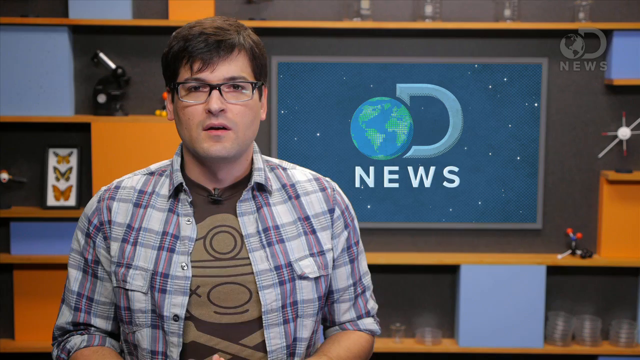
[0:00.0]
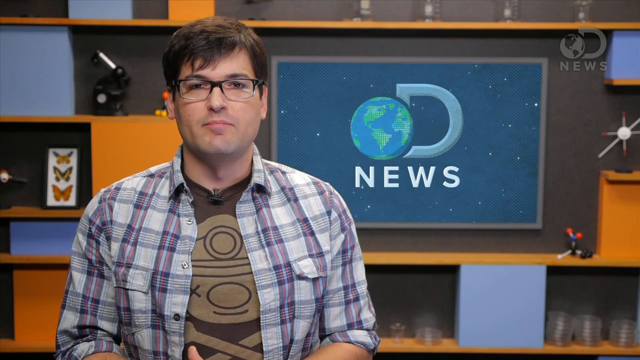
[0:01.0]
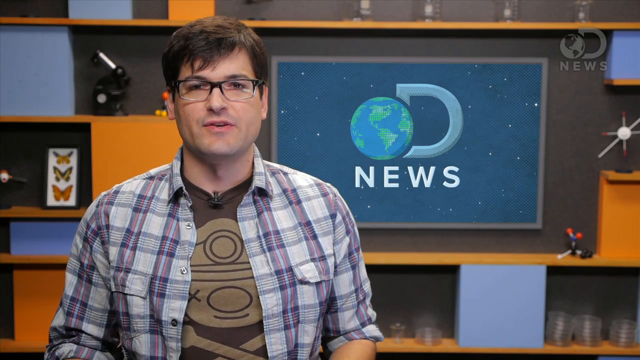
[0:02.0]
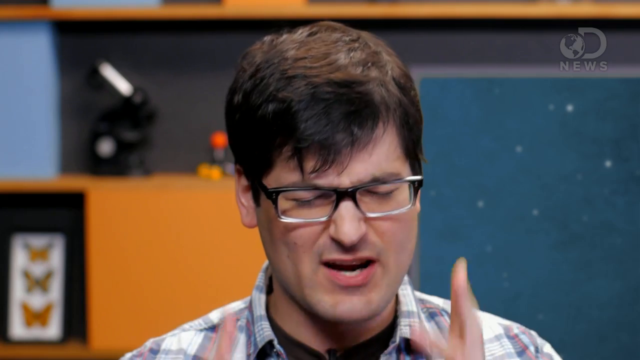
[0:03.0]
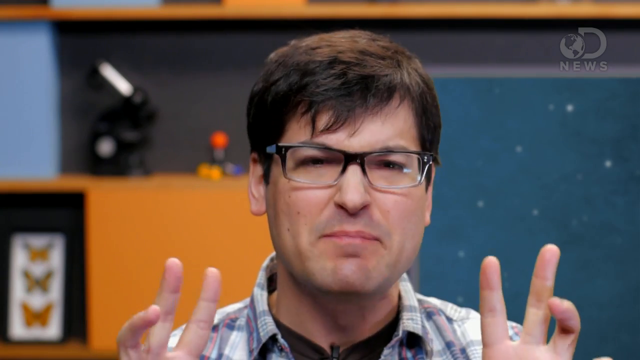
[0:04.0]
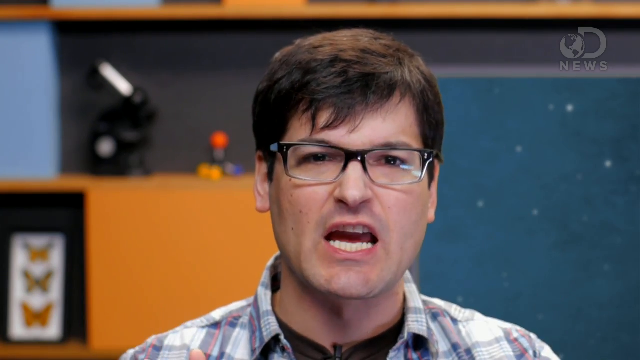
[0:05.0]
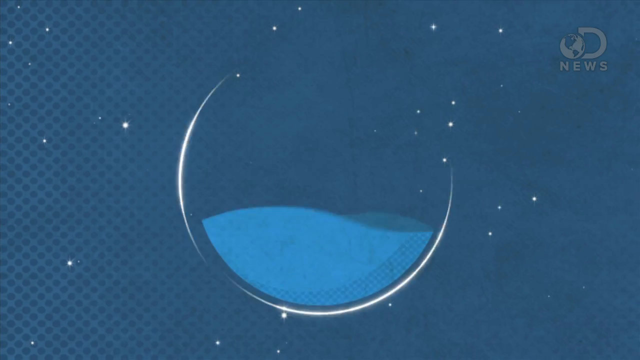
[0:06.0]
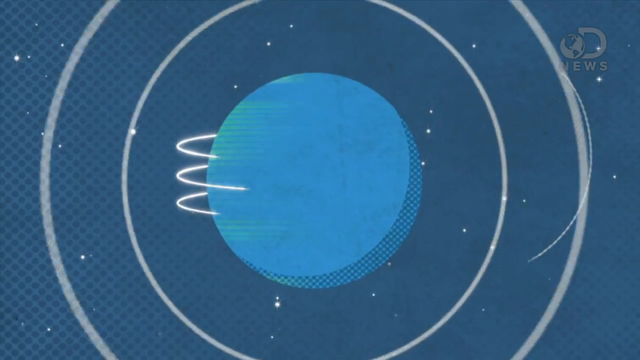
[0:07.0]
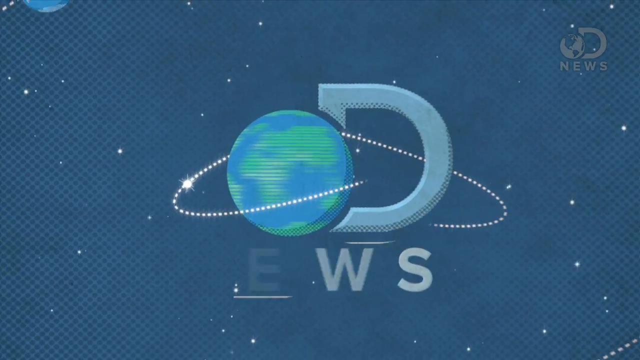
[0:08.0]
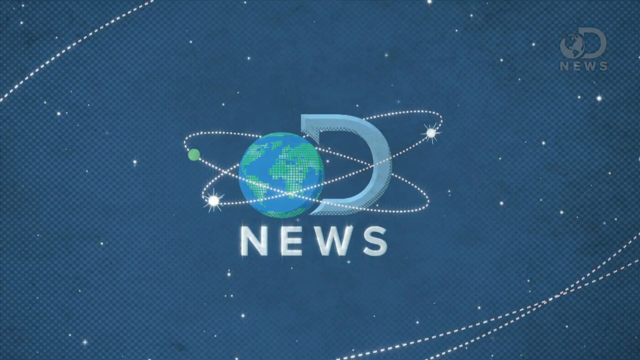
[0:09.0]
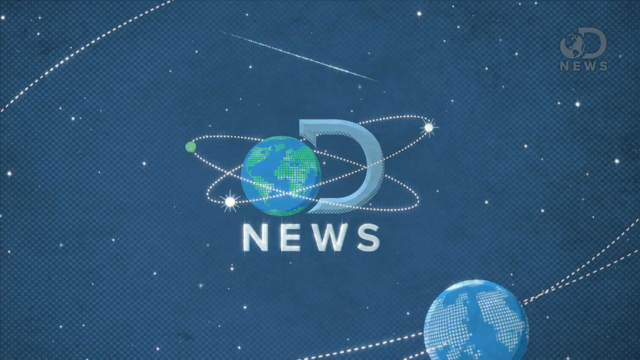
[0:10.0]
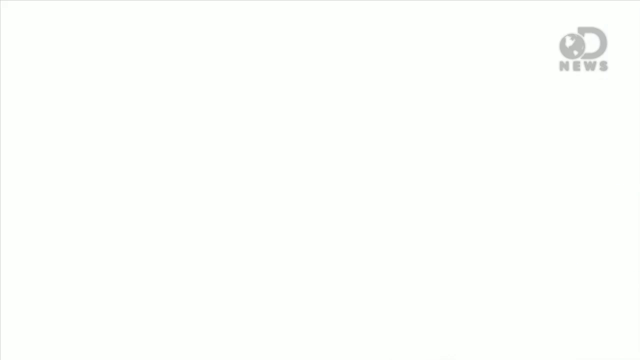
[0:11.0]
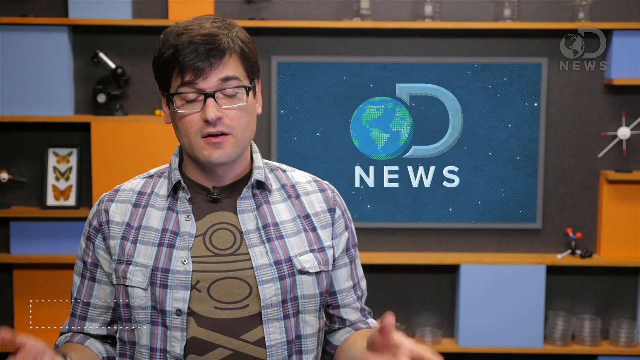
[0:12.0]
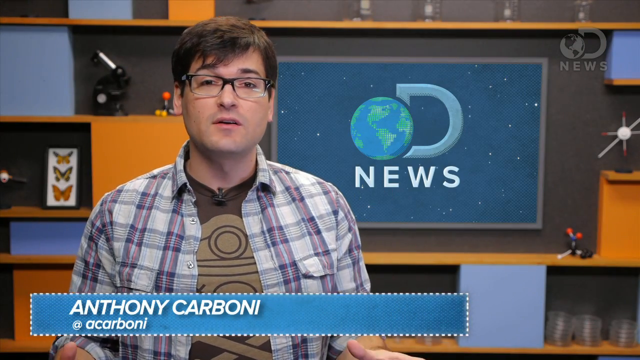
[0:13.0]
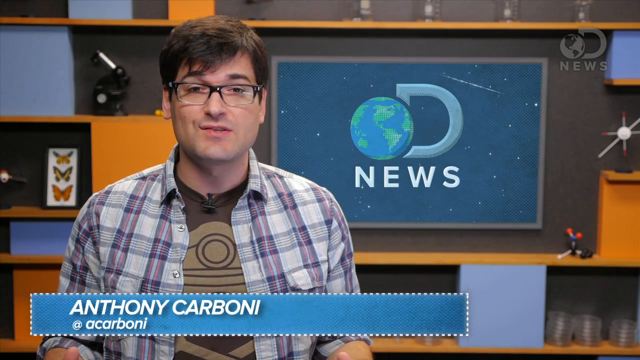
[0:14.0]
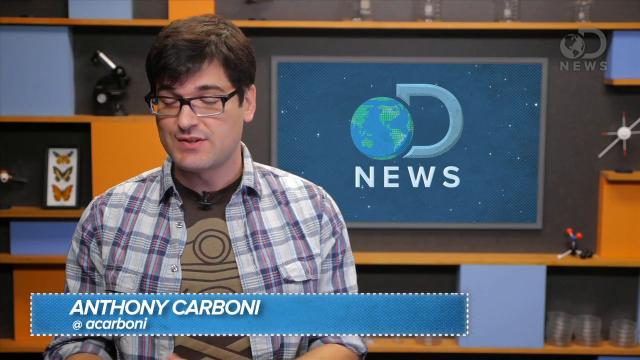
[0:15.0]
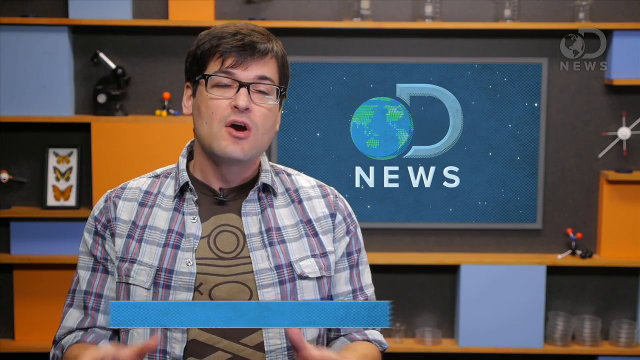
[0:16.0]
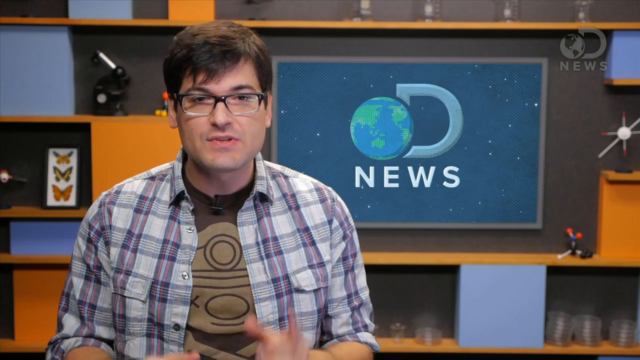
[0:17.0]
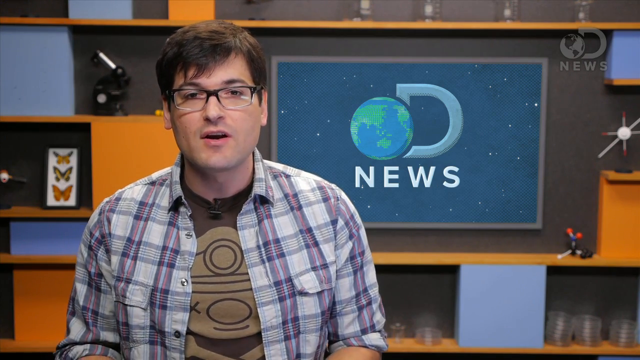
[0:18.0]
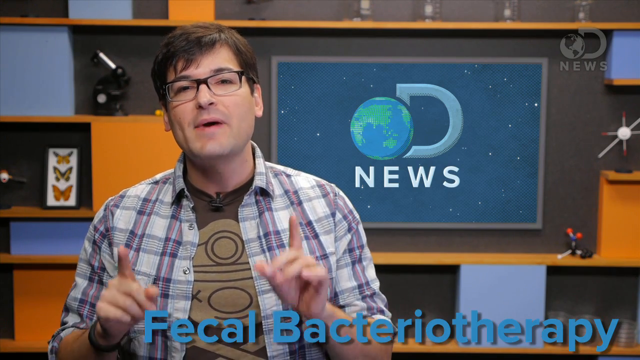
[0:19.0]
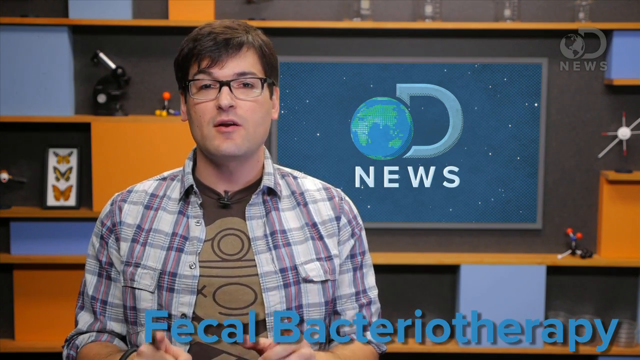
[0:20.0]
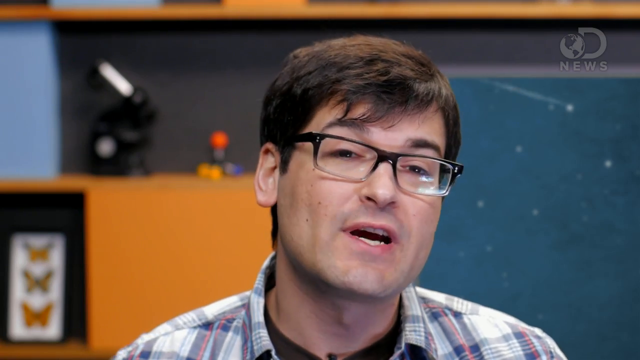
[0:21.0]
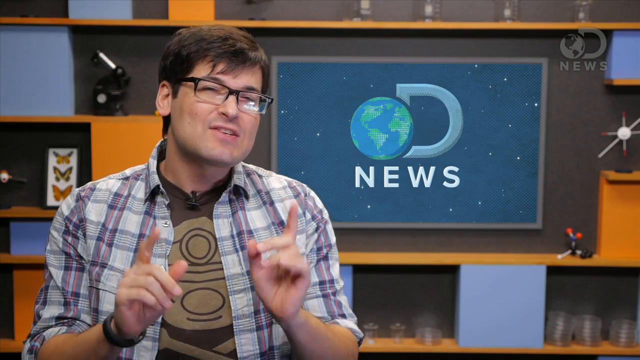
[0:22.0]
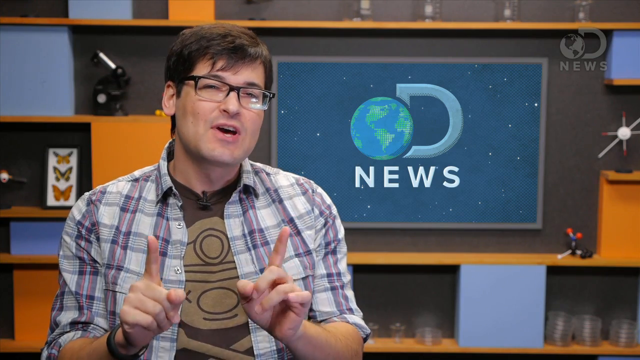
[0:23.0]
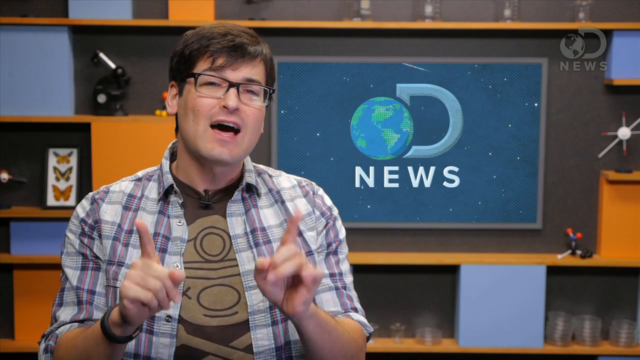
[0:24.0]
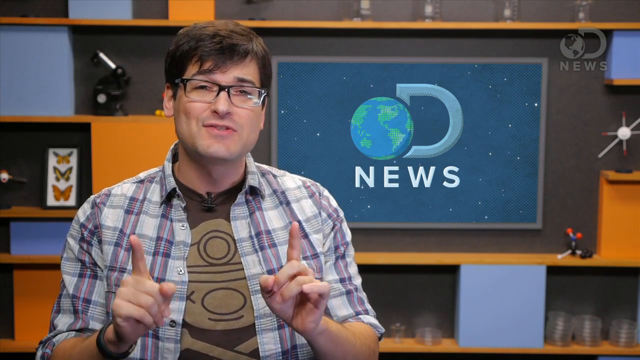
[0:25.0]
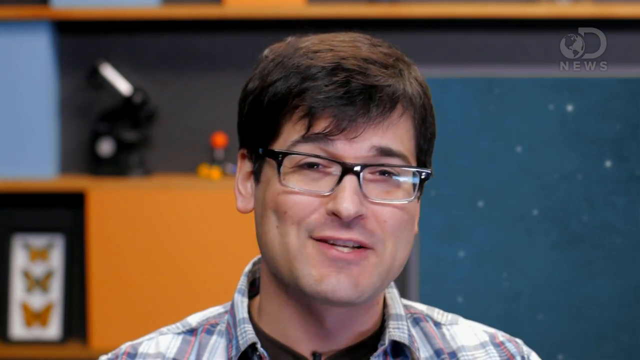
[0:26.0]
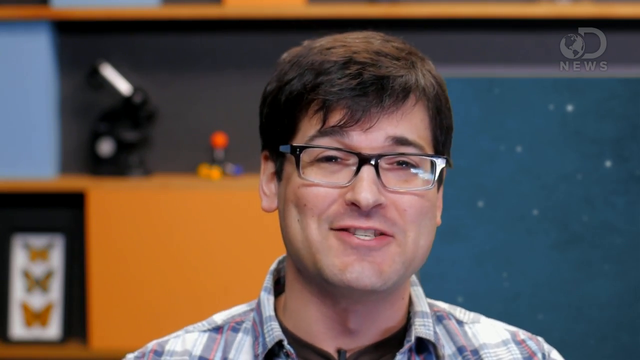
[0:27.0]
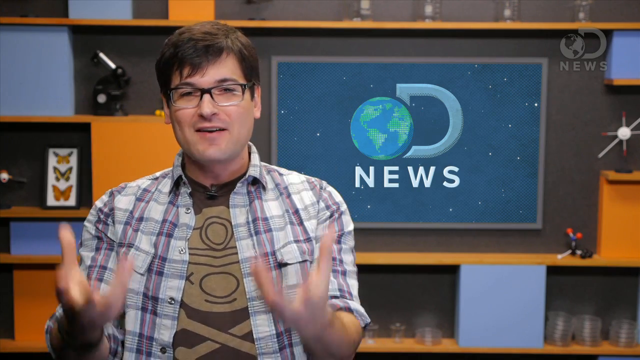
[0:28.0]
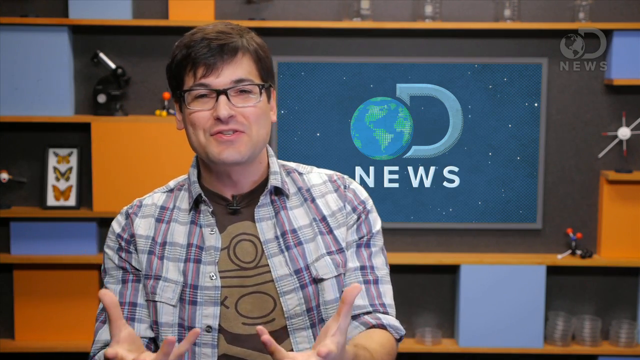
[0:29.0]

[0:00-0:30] The video opens with a man who appears to be Caucasian, wearing glasses, sitting in front of a TV screen showing a picture of the Earth with a "D" around it and "news." He wears a plaid shirt over a brown short-sleeved shirt. He begins talking, then puts both hands near the sides of his head, gritting his teeth and closing his eyes as he talks. Two circles come in with a graphic of the Earth, then the "D" comes in with "Nu" underneath, and what look like planets or stars circle the Earth. The shot returns to the man talking, and a graphic shows his name as Anthony Carboni. He puts both hands up in the air and then down while talking, and moves his head to the right. He repeatedly puts his hands up in front of his chest with his pointer fingers pointing upward, emphasizing a point, then moves them up near his head, back down to his chest, and near his head again. He then holds his palms upward and out as he talks. A graphic follows showing a person who appears to have pain in their abdomen.